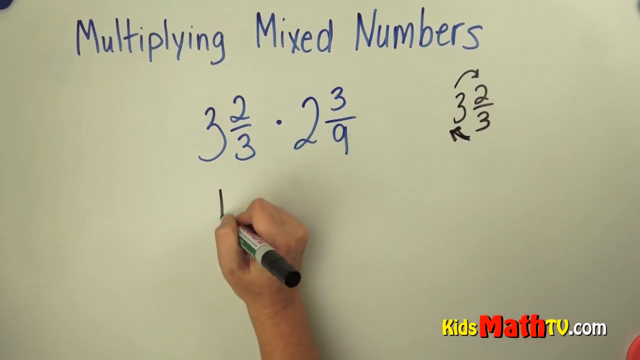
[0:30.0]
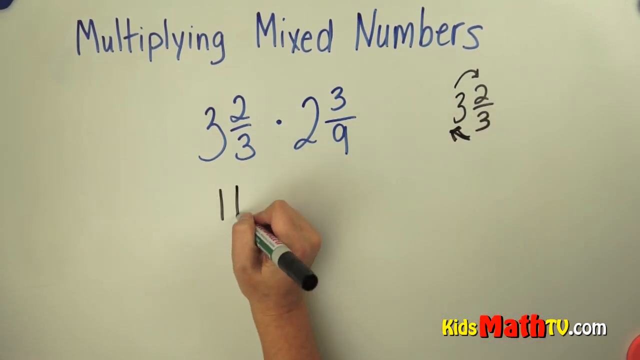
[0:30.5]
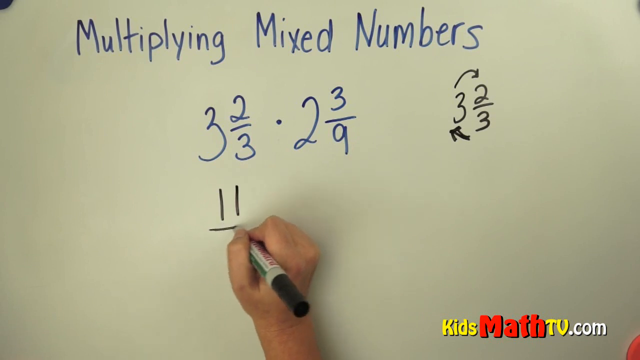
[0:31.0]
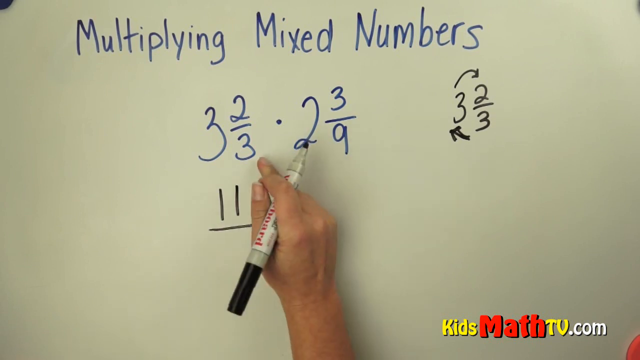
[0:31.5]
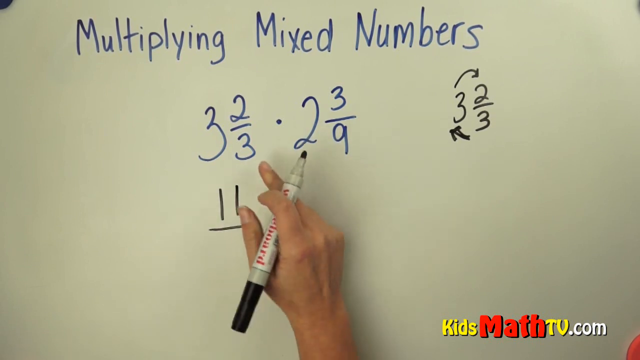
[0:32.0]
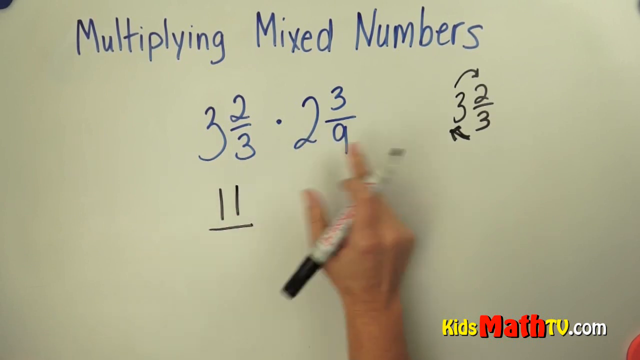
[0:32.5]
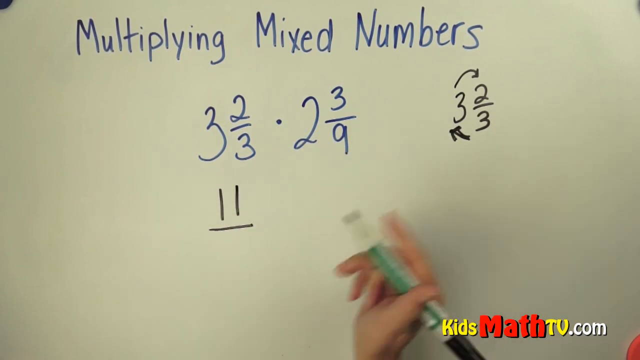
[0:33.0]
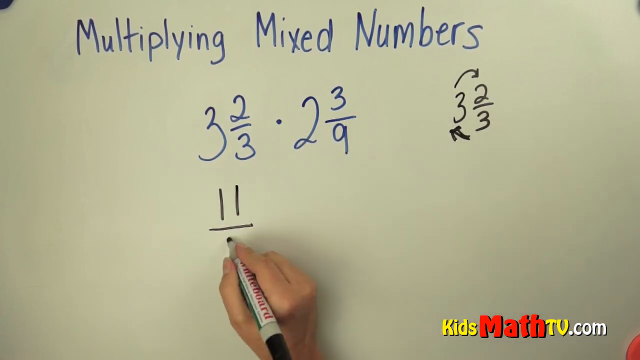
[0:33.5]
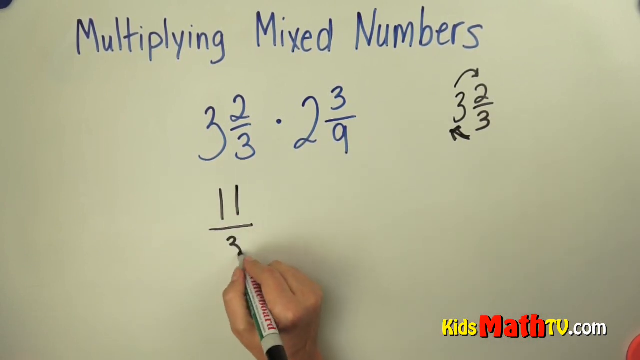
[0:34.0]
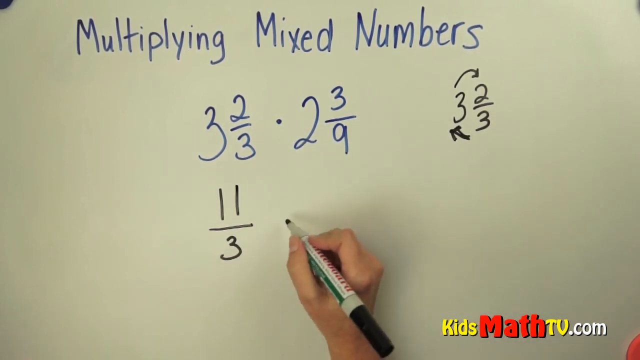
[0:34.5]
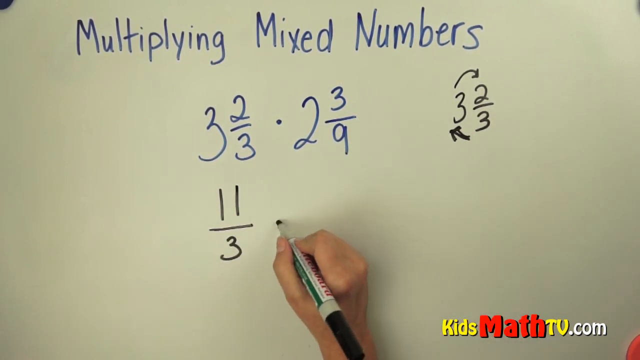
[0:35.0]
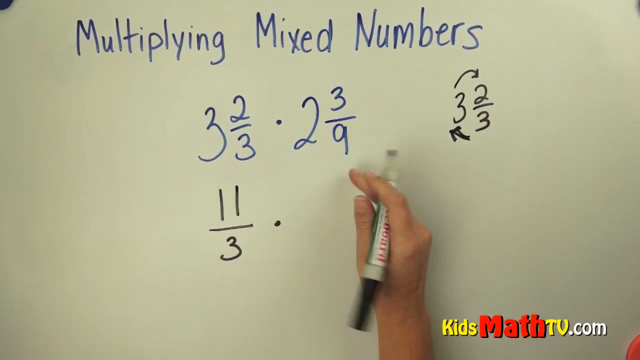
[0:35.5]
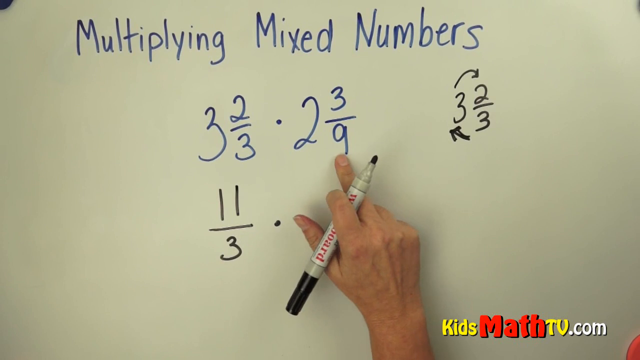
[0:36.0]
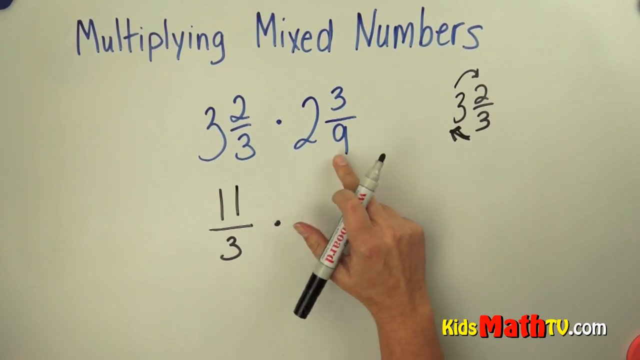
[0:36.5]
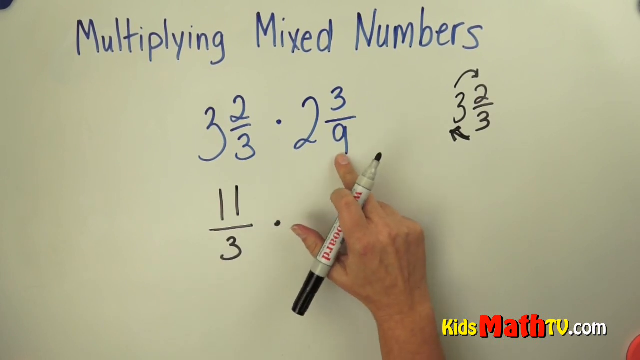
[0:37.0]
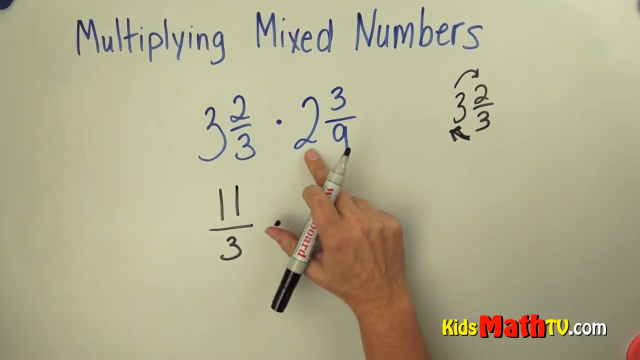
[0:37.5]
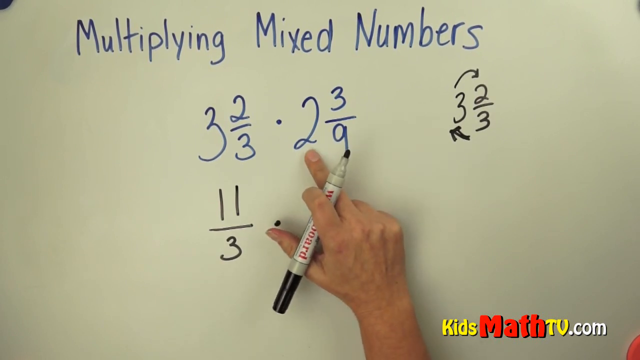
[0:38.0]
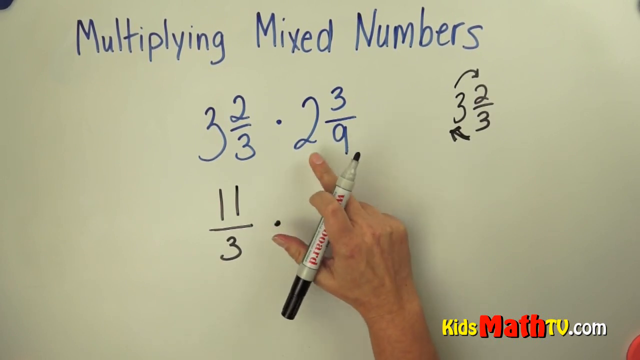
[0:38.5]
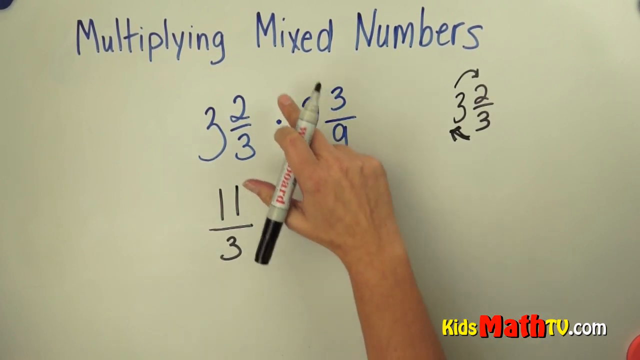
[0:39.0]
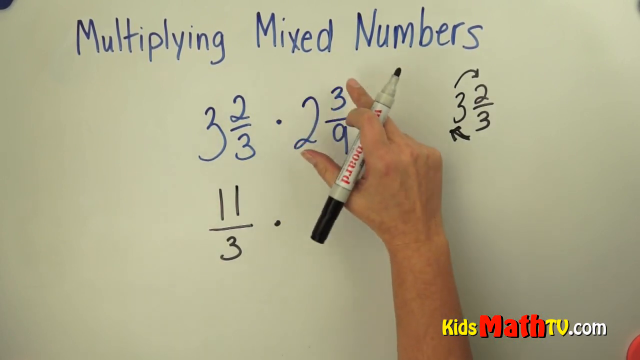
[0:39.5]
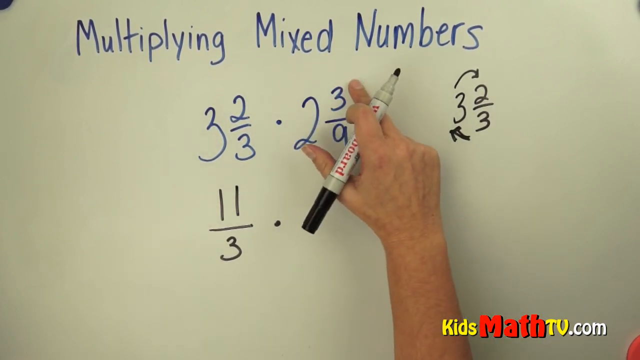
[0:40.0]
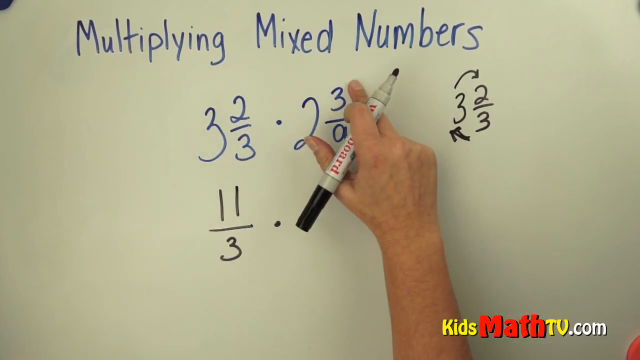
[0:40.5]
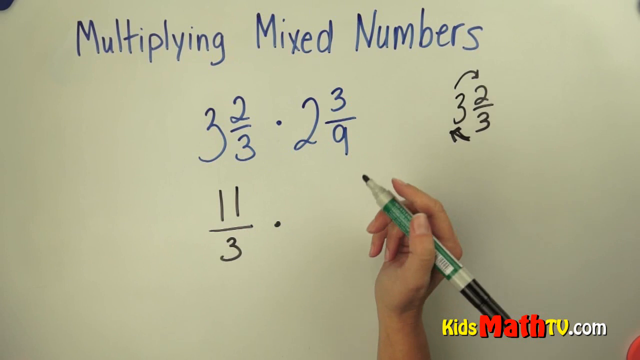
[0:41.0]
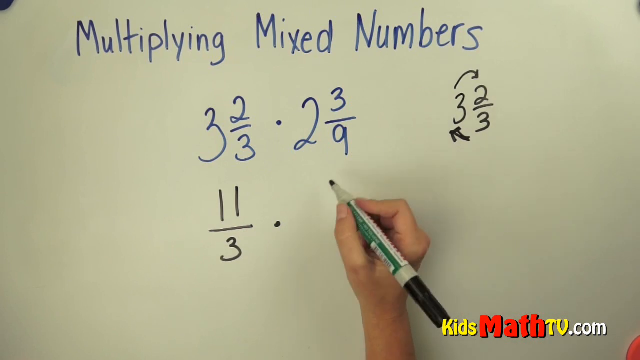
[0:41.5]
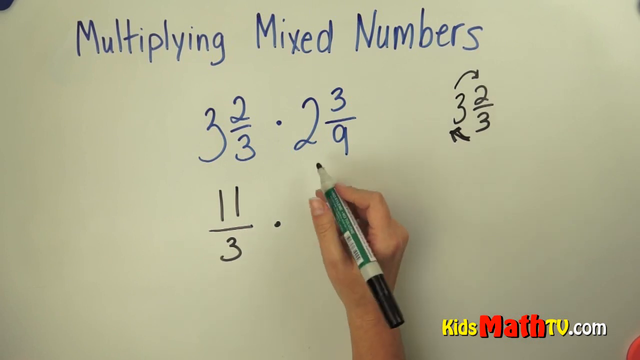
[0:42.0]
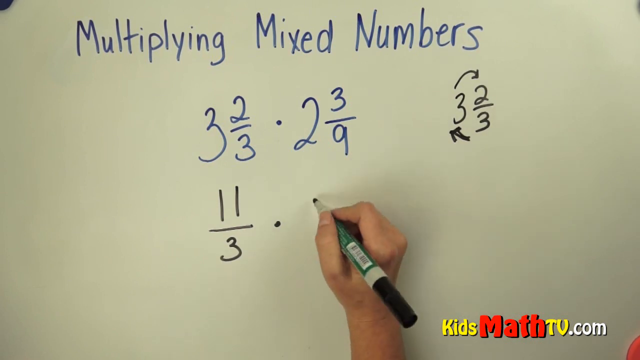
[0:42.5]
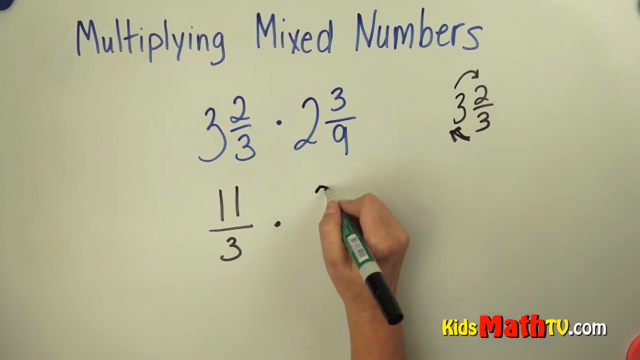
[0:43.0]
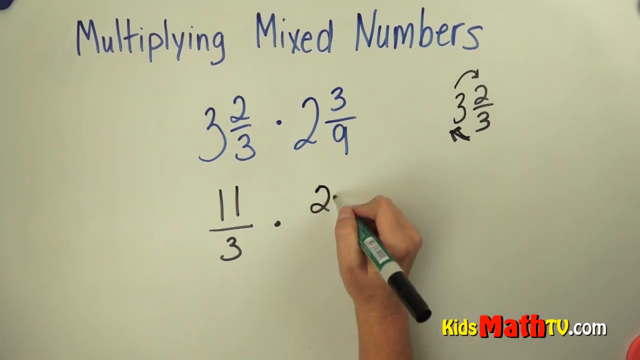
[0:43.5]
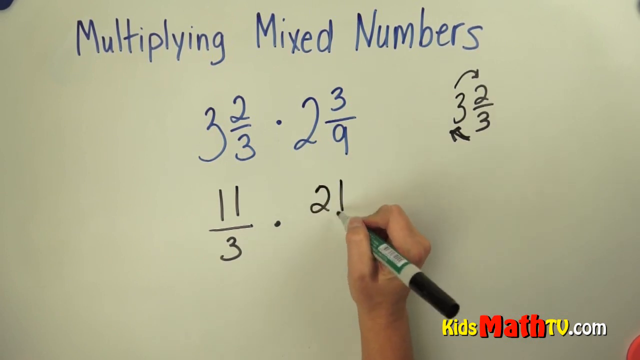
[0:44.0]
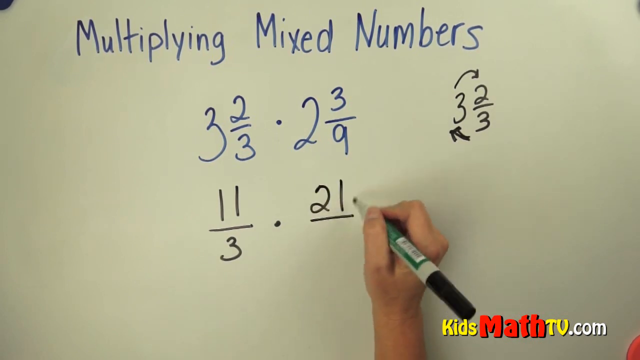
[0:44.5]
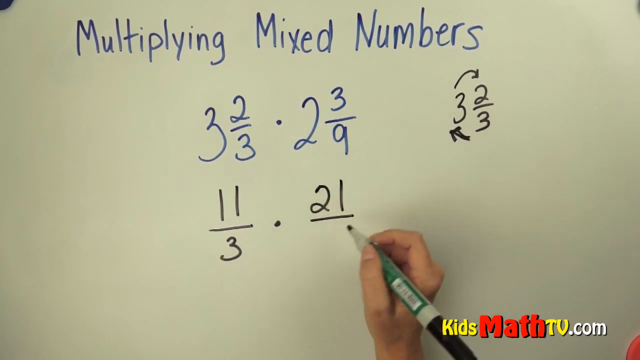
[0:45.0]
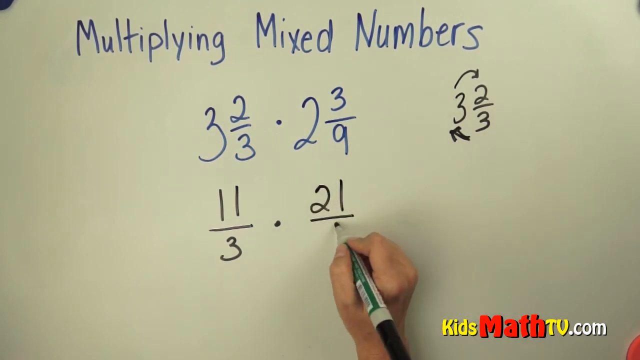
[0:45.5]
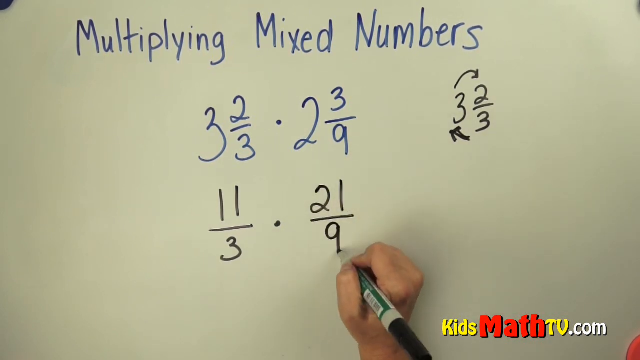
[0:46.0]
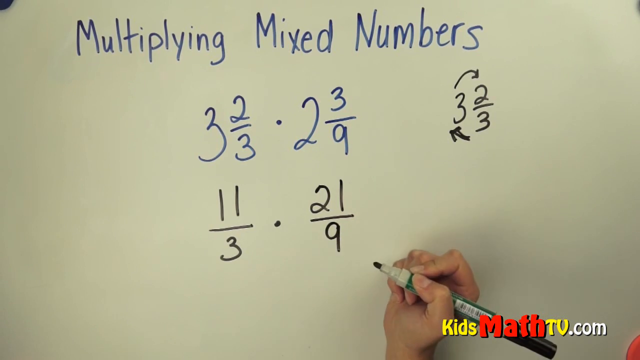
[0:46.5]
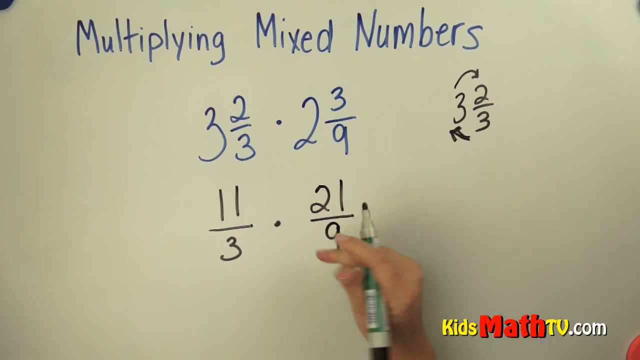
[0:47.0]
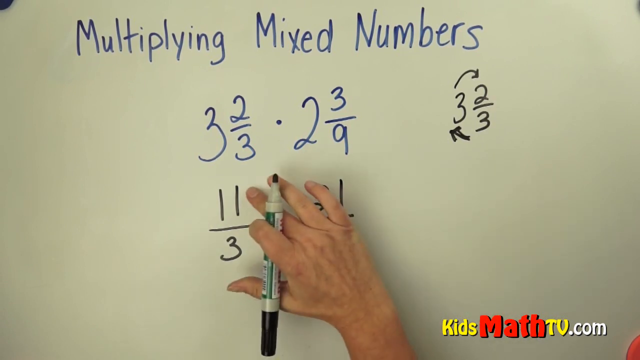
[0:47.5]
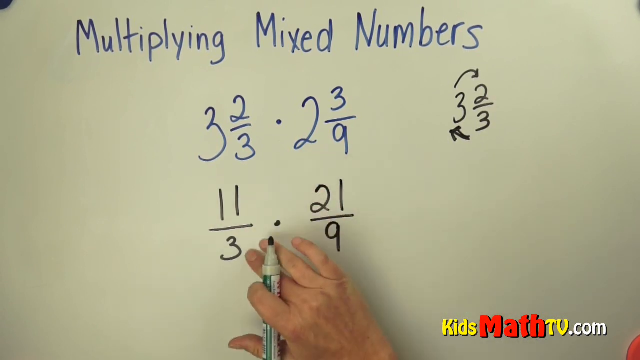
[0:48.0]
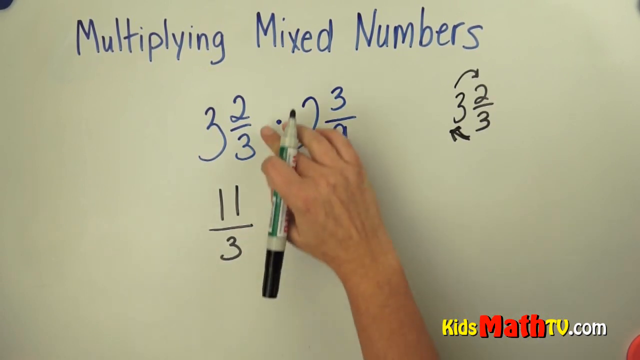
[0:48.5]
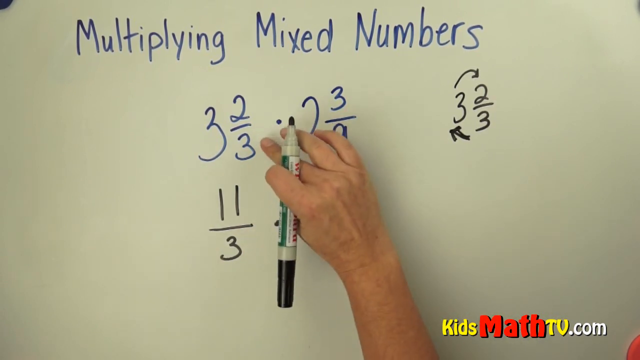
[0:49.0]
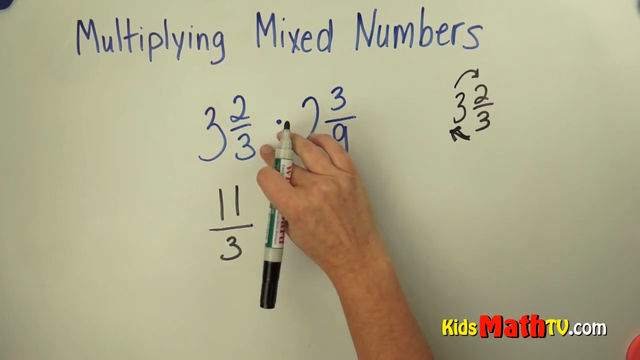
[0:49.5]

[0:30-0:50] The whiteboard shows the blue heading "Multiplying Mixed Numbers" with the two numbers three and two thirds and two and three ninths beneath it. To the right, three and two thirds is written again in black, with two arrows: one connecting the whole number three with the numerator two, and one going from the denominator to the whole number three. Beneath the numbers, a Caucasian right hand holds a felt tip pen between the thumb and index finger and writes eleven over three. The hand then points at the second number with the middle finger, at times at the denominator and at times at the whole number, and writes twenty one over nine underneath the second number. The hand then moves to different points on the whiteboard.